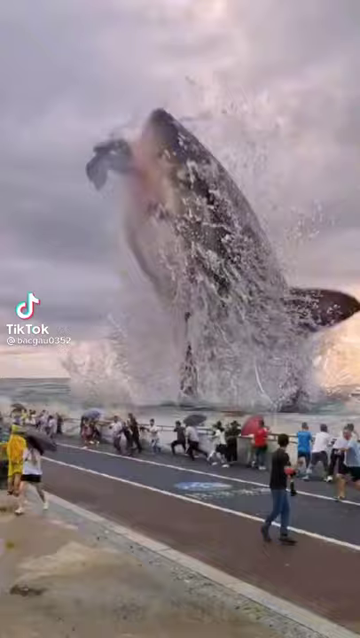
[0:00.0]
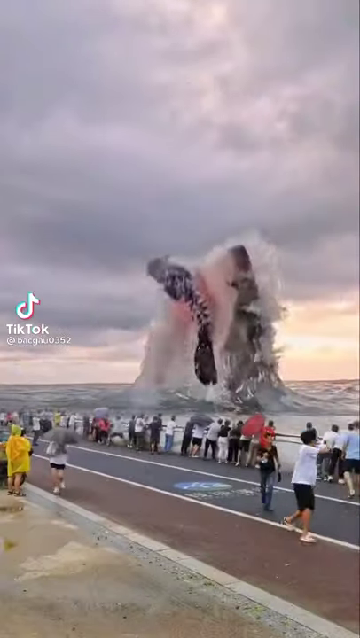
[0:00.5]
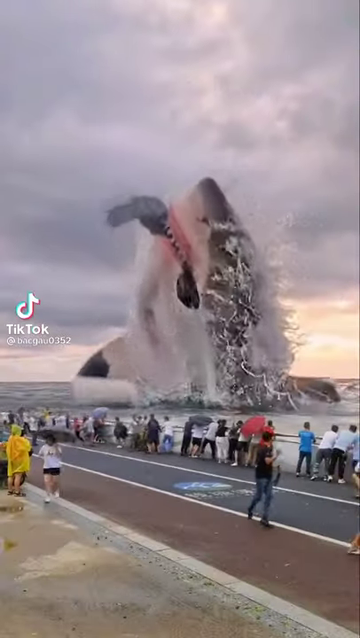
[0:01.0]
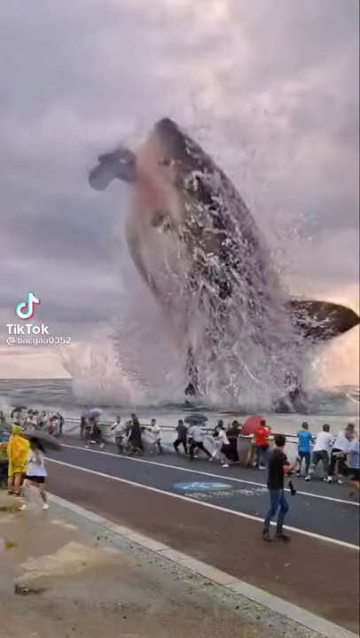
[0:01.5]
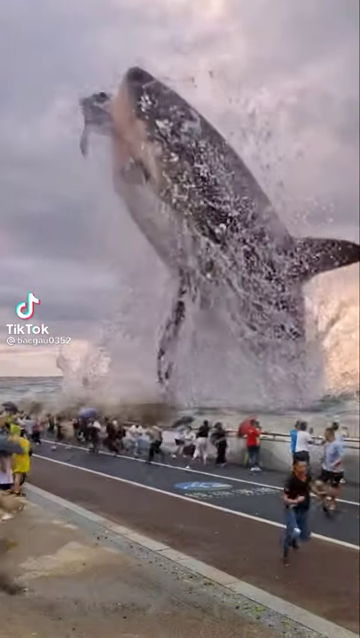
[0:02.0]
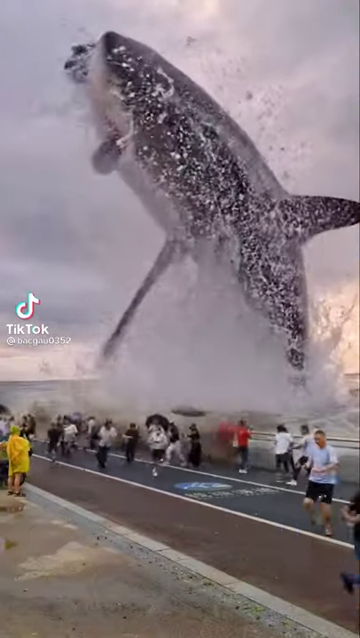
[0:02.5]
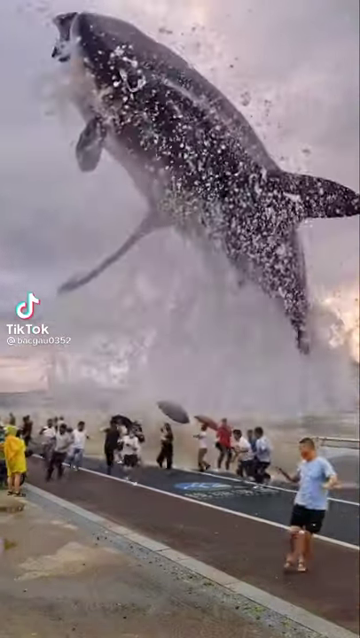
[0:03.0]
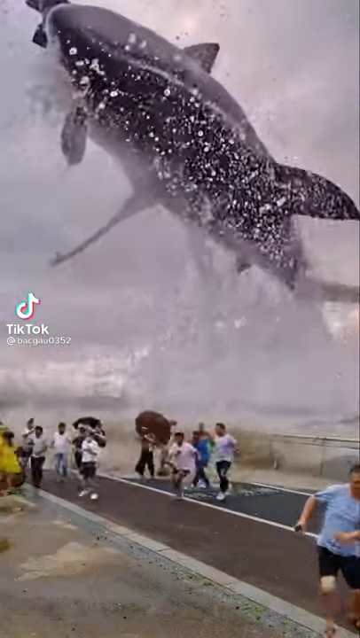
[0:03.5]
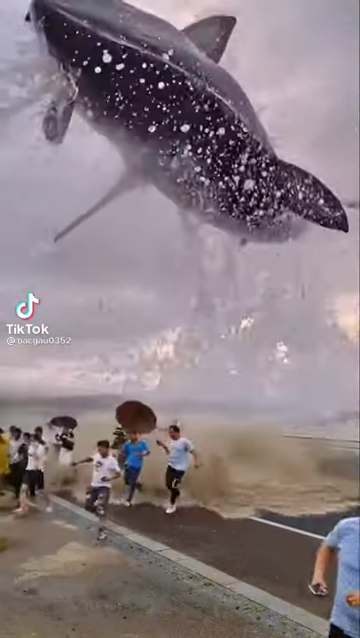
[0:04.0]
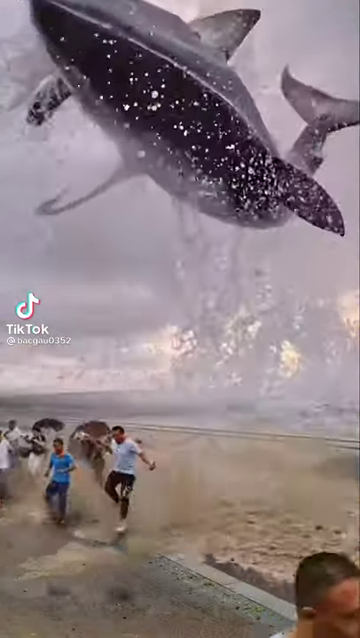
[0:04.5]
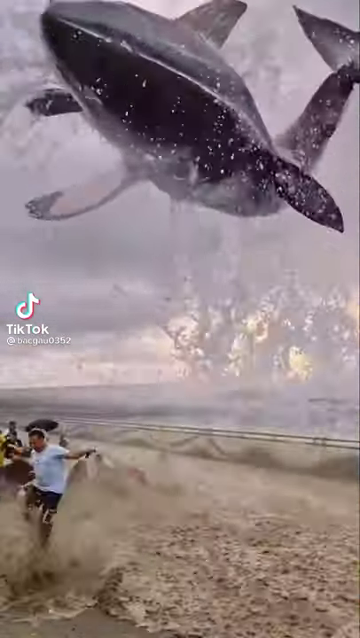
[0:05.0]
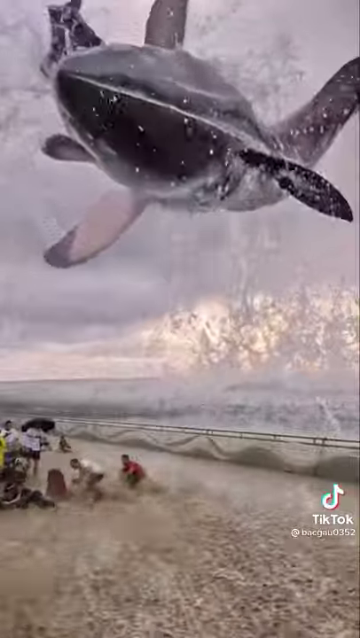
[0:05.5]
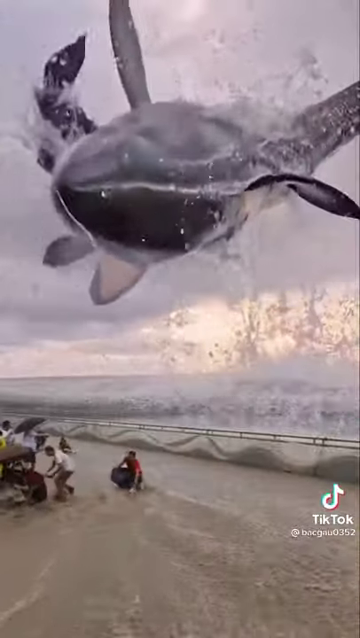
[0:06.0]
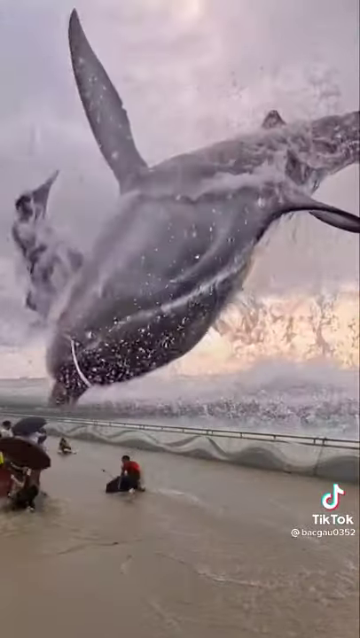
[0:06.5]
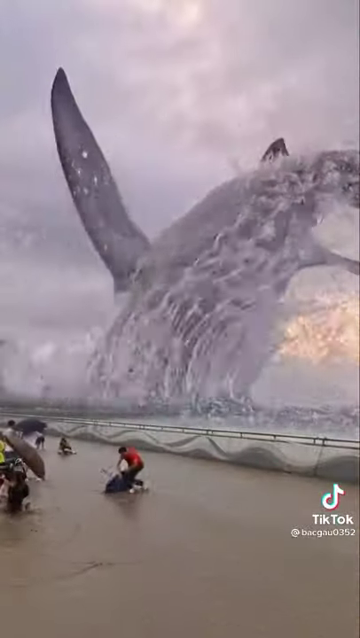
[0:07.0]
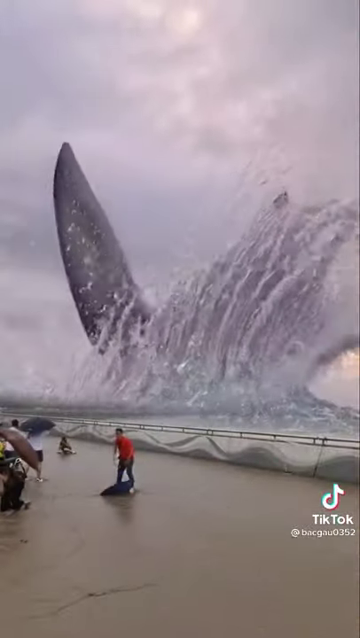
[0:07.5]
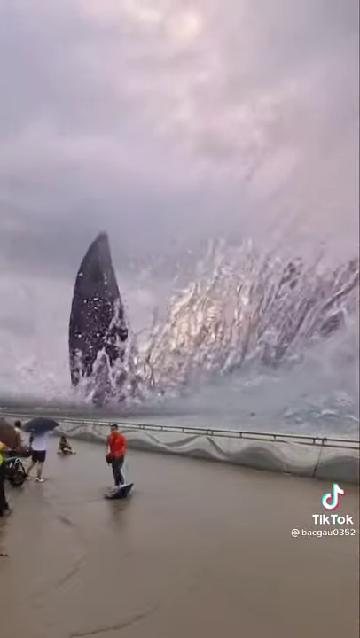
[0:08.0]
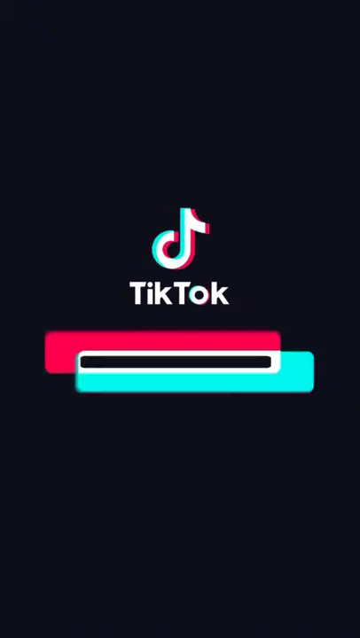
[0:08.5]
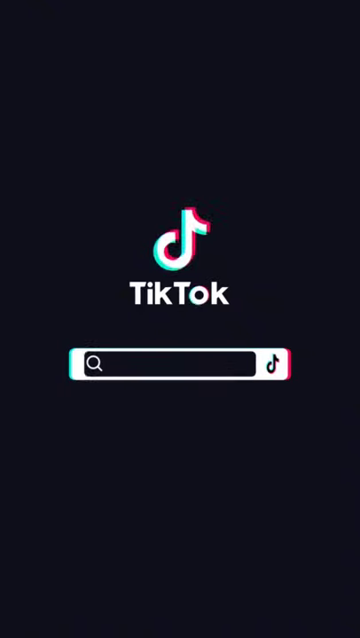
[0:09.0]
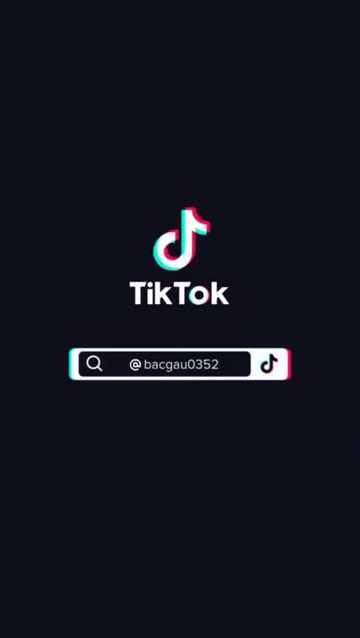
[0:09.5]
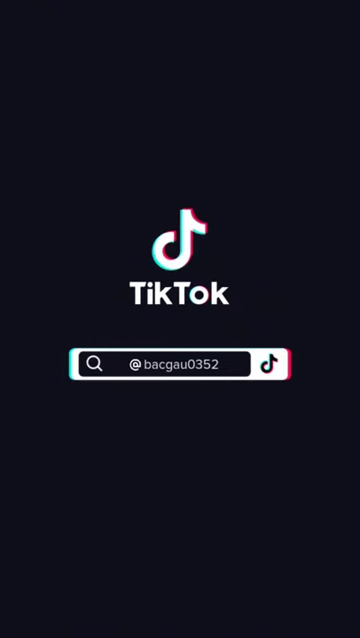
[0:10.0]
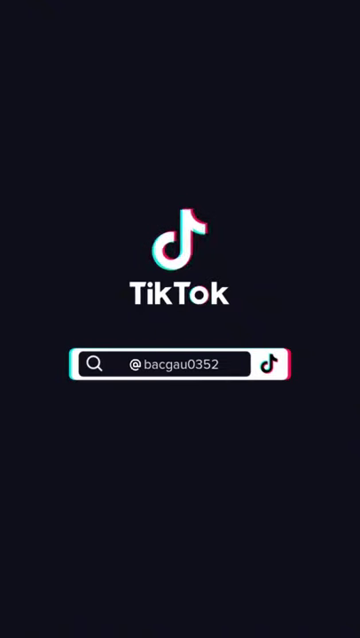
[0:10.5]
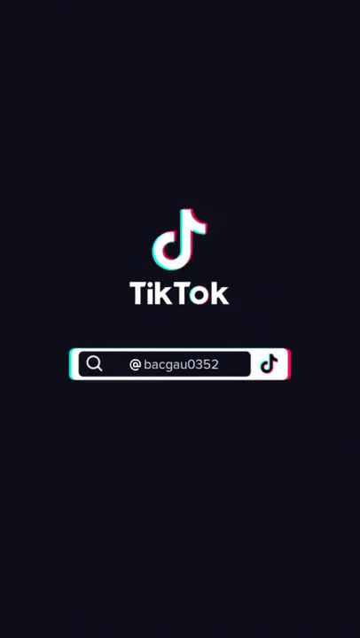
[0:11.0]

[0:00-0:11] A huge, massive creature that appears to be a Megalodon shark jumps up through the air with something in its mouth, then arcs and splashes back into the water. The shark is dark gray with a white underbelly. Along the edge of this area, people who had been standing nearby run, surprised by the appearance of the massive beast. A flood of water covers the road behind them as the animal emerges and then splashes back down into the water. The footage is most definitely from a movie.